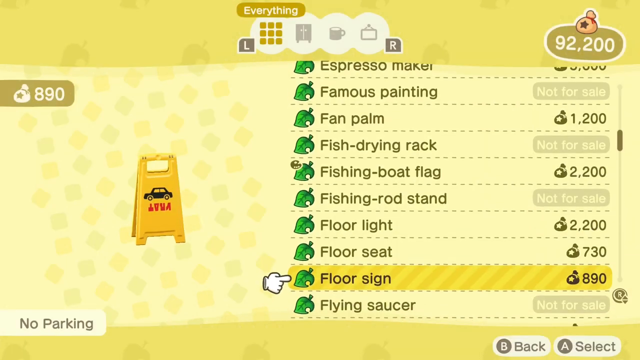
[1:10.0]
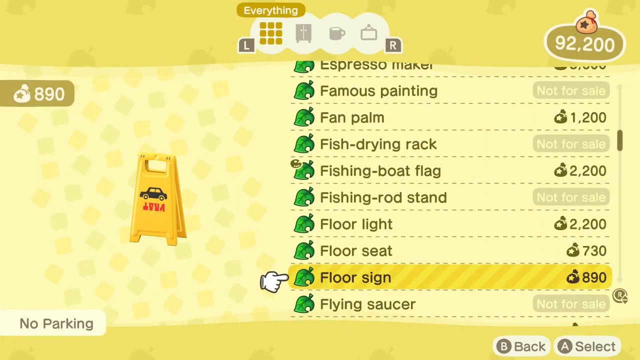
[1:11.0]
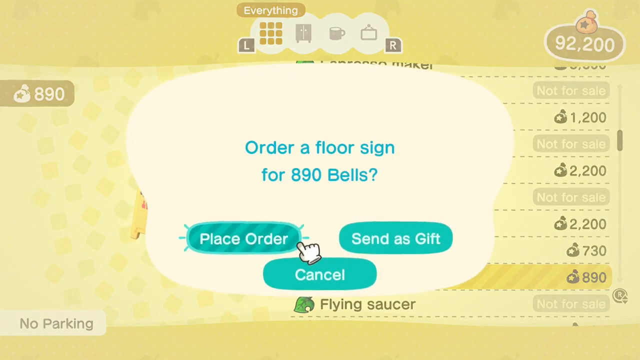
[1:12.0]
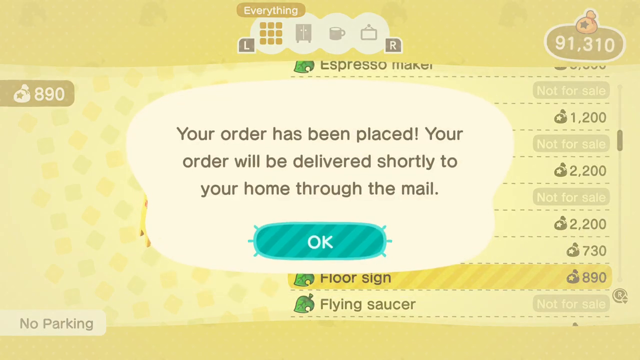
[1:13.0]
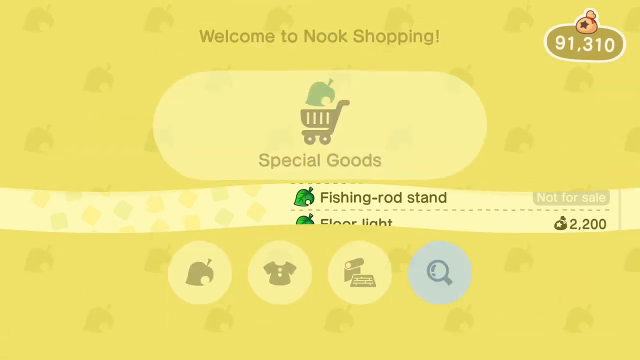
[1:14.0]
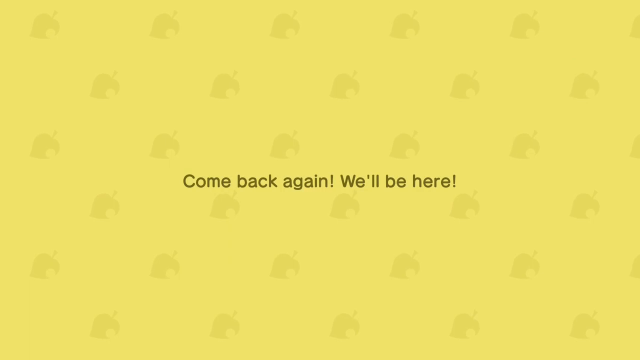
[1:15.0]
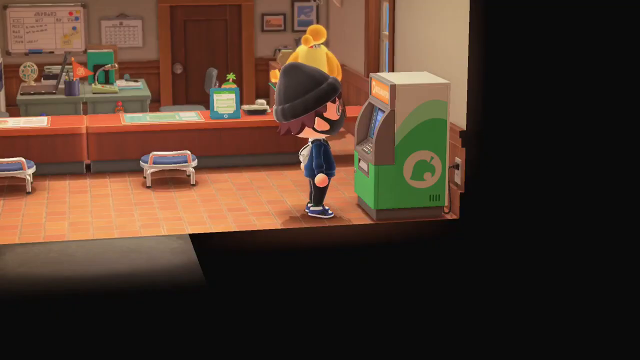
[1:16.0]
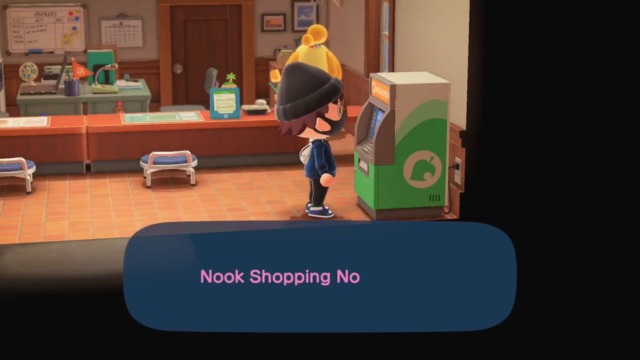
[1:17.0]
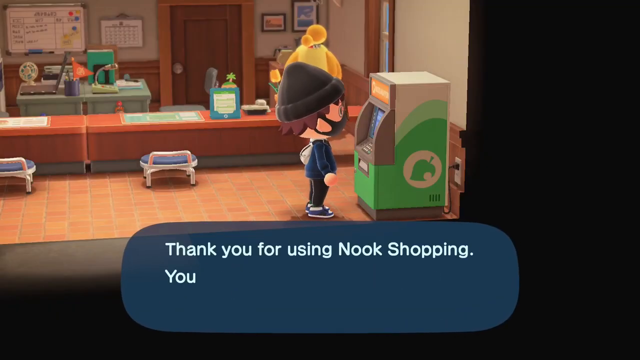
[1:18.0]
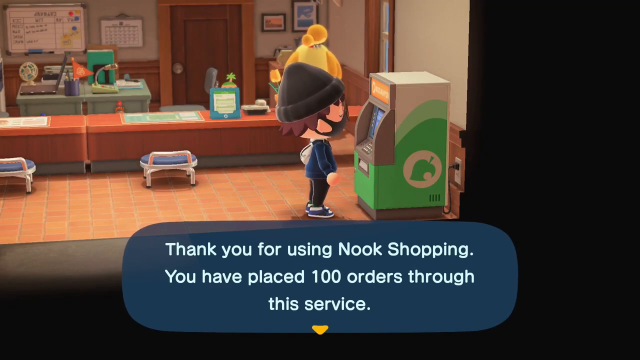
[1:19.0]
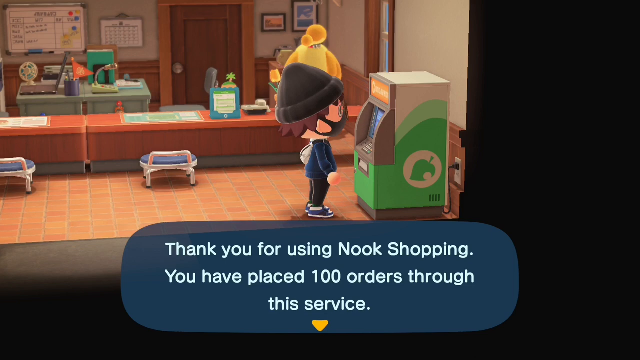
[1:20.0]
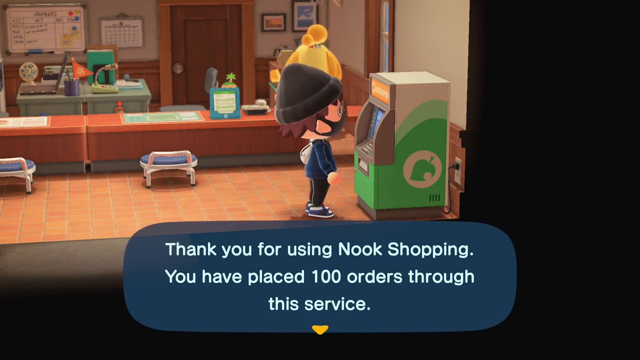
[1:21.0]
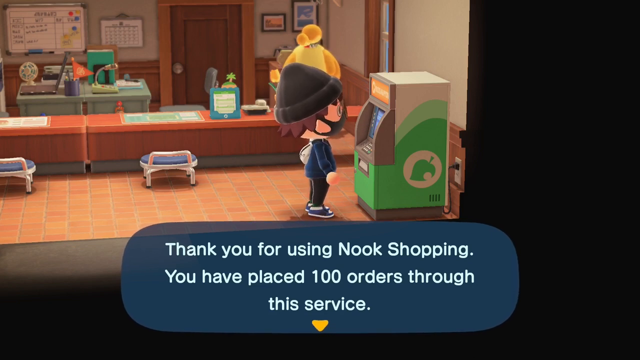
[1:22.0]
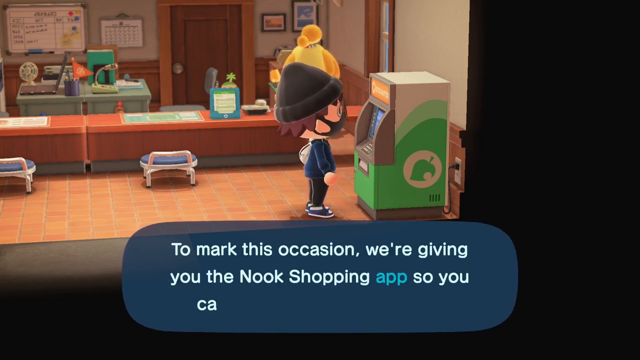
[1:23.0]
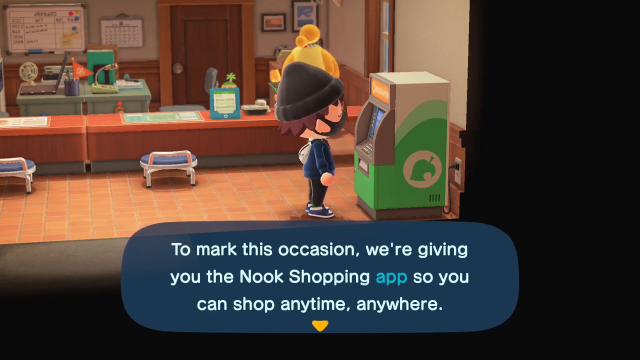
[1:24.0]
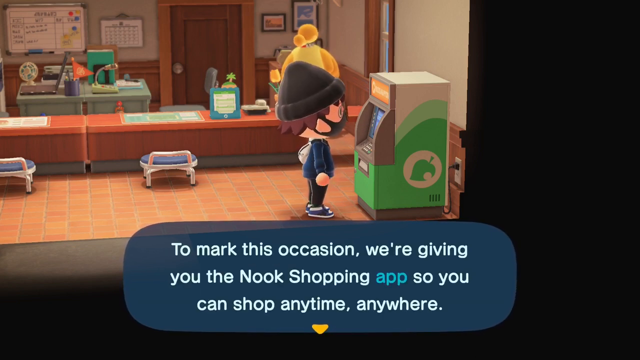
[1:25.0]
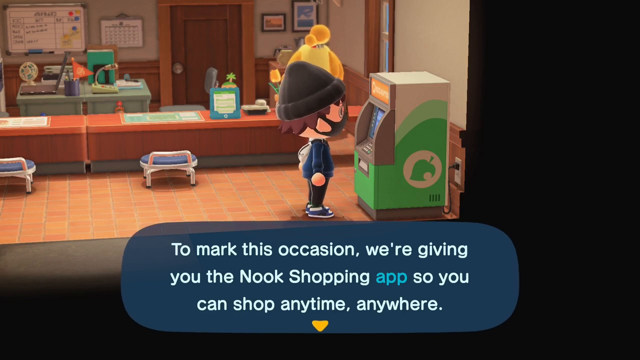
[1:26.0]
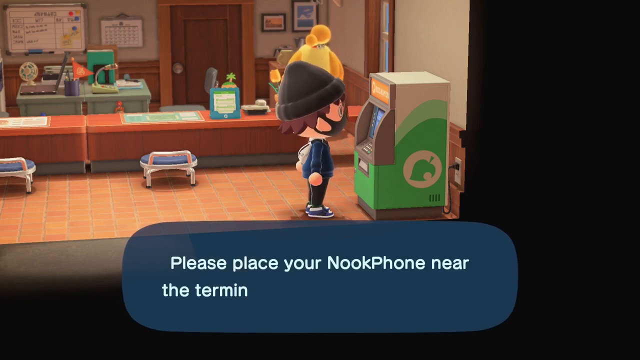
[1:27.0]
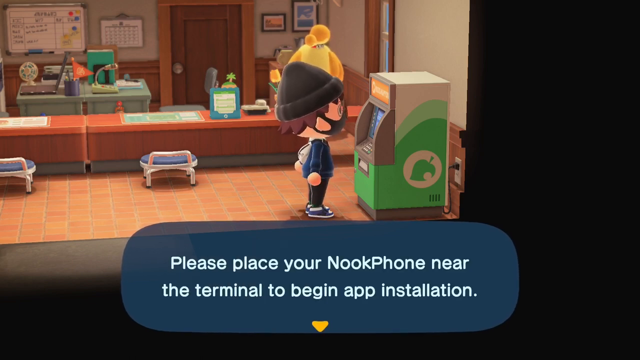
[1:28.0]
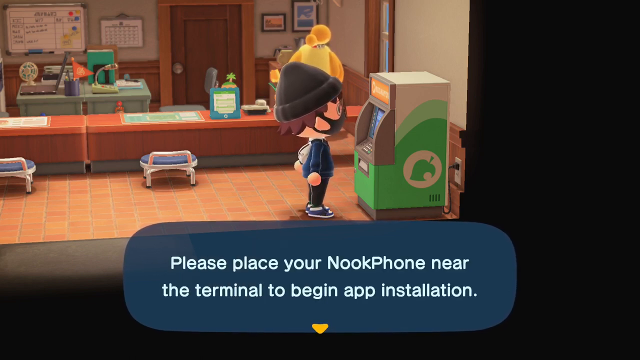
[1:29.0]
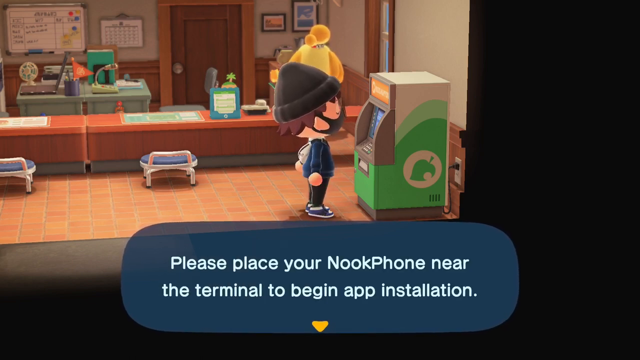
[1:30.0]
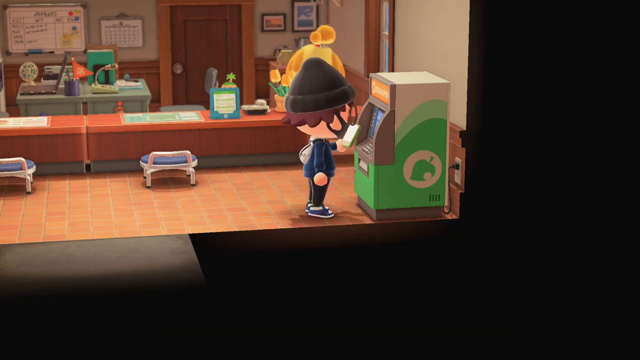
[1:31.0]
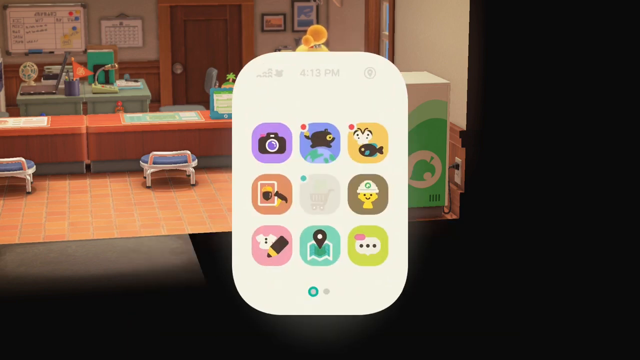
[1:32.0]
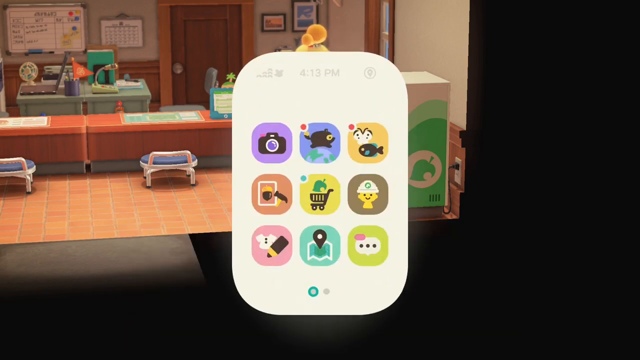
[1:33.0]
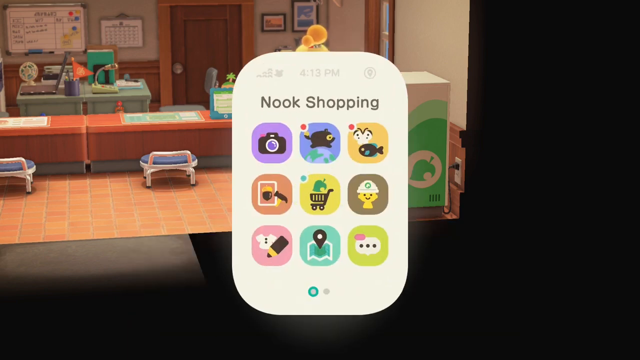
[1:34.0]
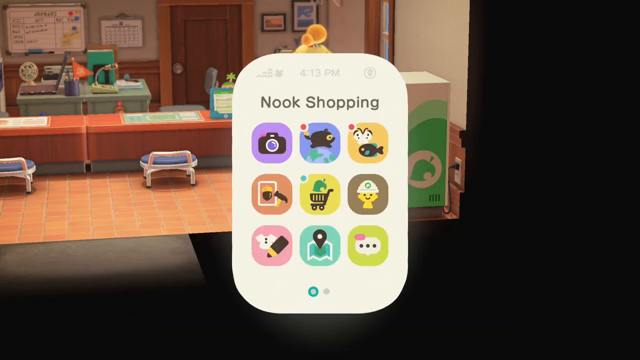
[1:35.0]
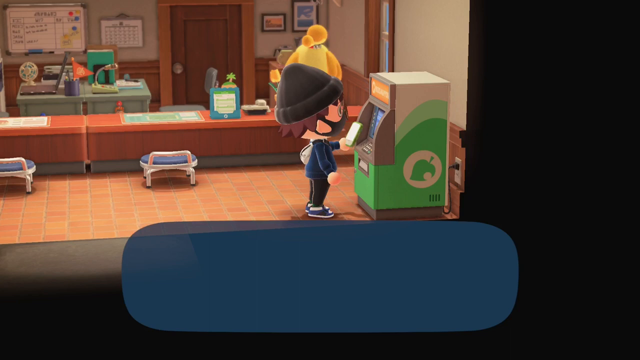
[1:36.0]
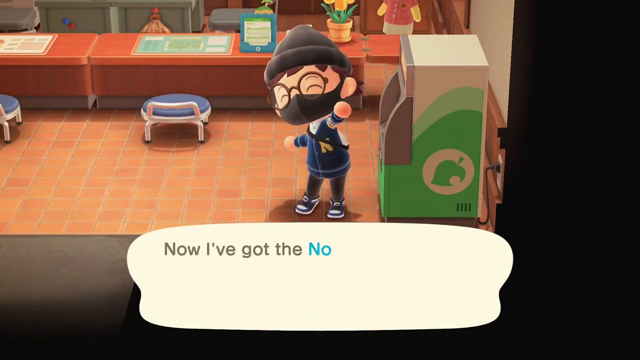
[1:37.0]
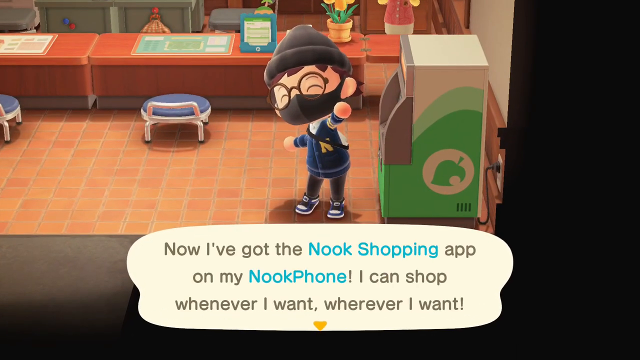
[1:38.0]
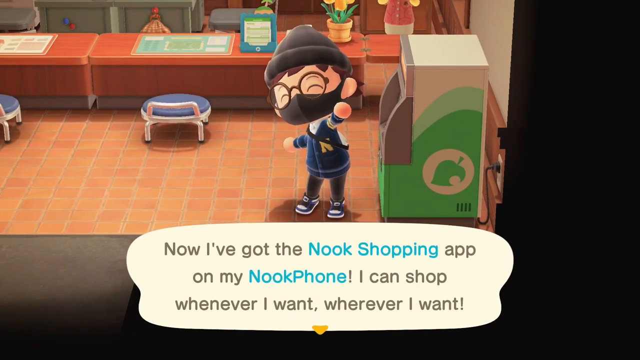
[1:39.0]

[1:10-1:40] The player also purchases a floor sign for 890 bells and exits the shop. A yellow screen with leaves in the background appears with black text on top reading "come back again, we'll be here." When the player exits the ATM, a notification at the bottom of the screen reads "thank you for using Nook Shopping. You have placed 100 orders through this service. To mark this occasion, we're giving you the Nook Shopping app so you can shop anytime, anywhere." The character moves slightly in place, swinging their arms near their sides and moving slightly up and down. The next caption reads "please place your Nook phone near the terminal to begin app installation." The character takes out their phone, and the Nook Shopping app is now displayed on it. They hold the phone up in the air, and the characters behind the counter clap. A caption says "now that I've got the Nook shopping app on my Nook phone, I can shop whenever I want, wherever I want."